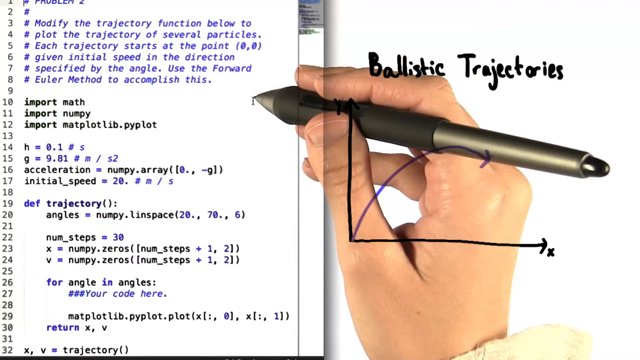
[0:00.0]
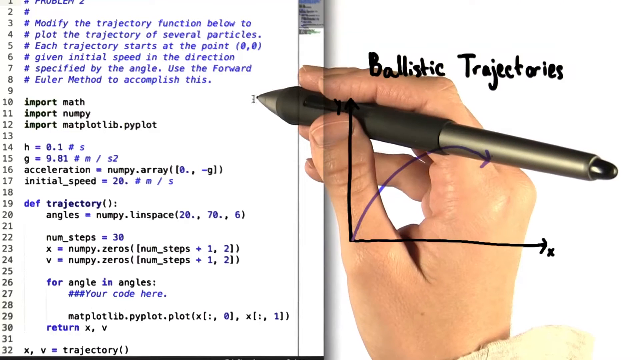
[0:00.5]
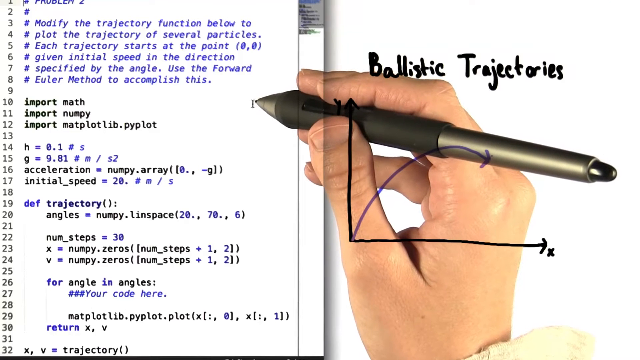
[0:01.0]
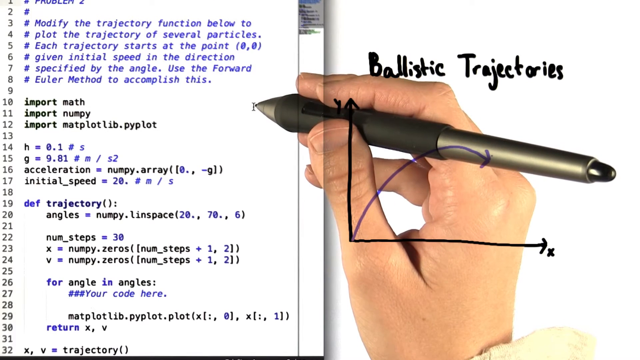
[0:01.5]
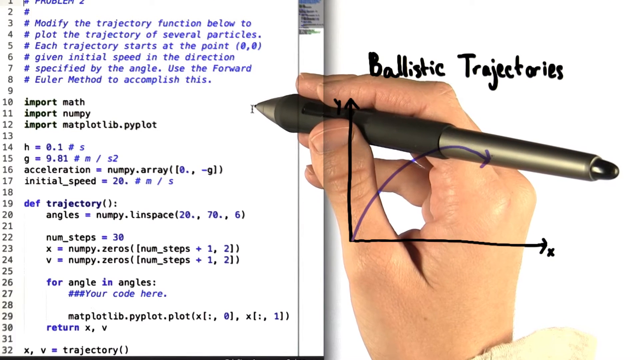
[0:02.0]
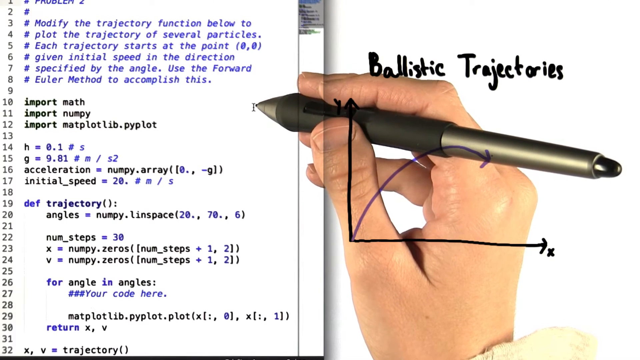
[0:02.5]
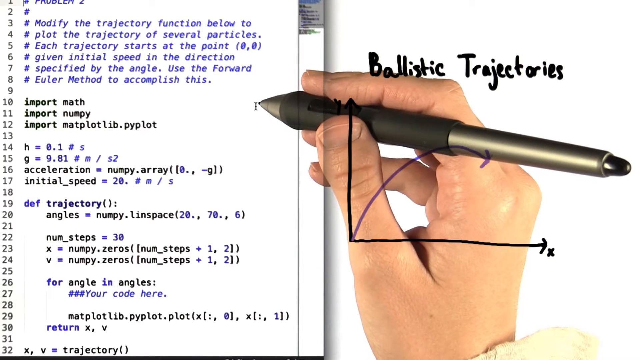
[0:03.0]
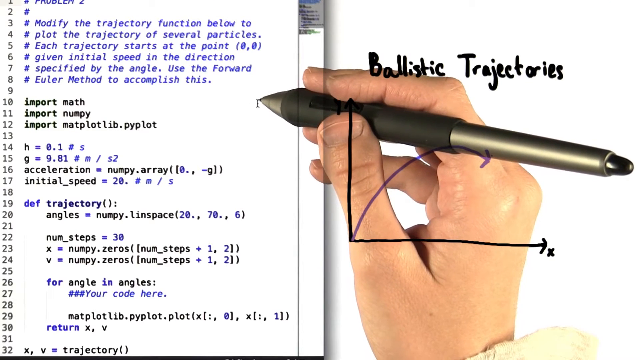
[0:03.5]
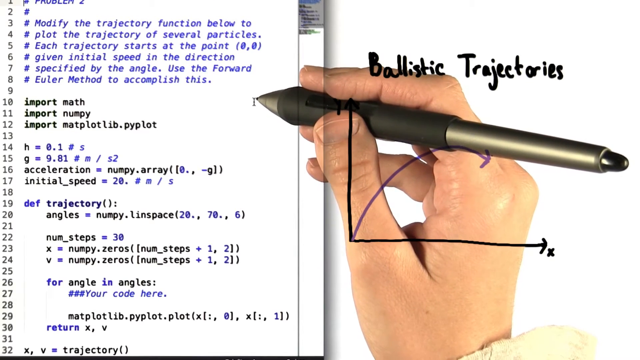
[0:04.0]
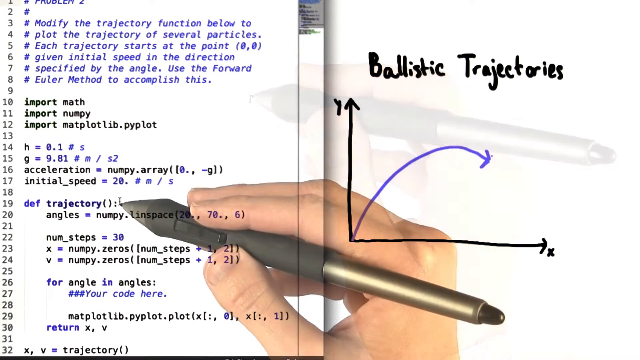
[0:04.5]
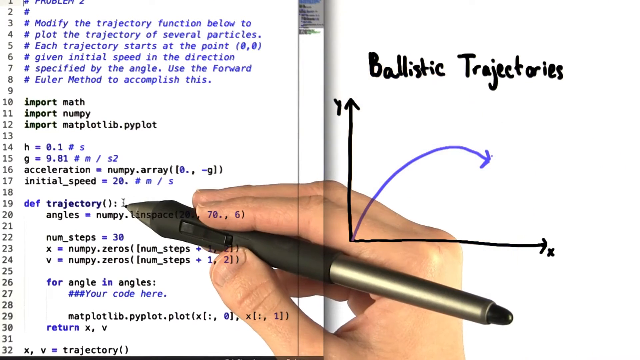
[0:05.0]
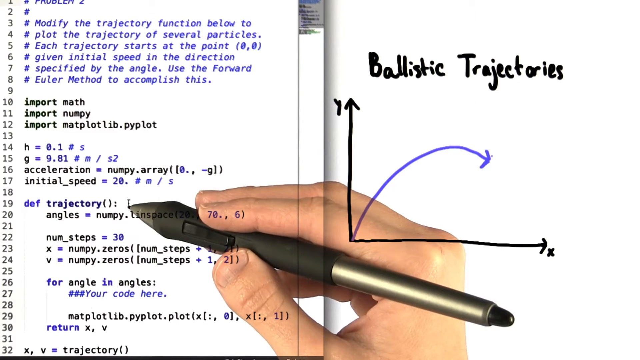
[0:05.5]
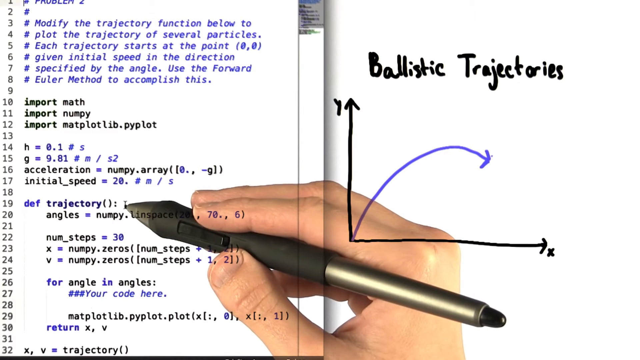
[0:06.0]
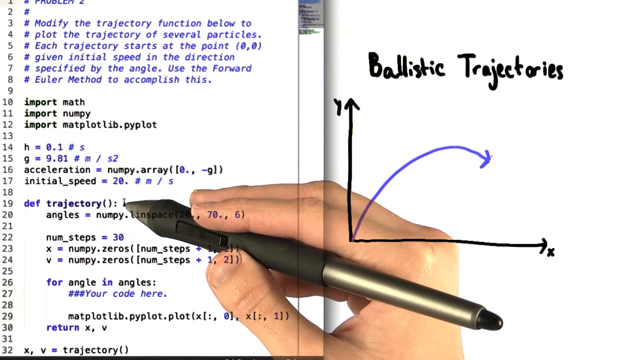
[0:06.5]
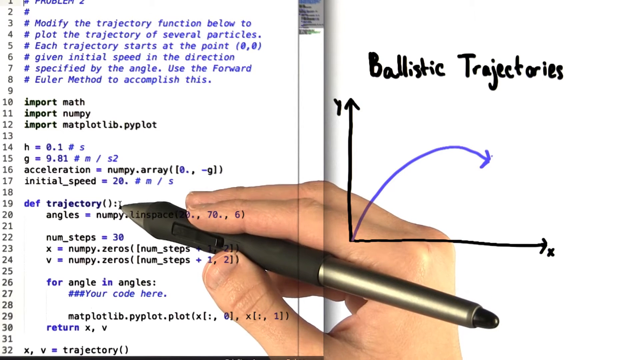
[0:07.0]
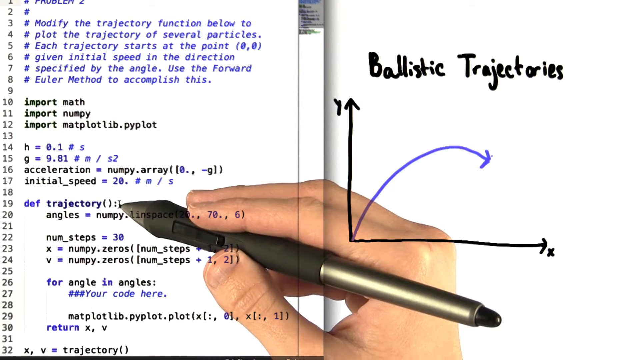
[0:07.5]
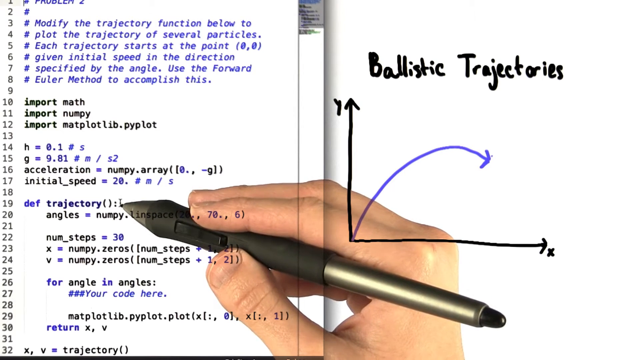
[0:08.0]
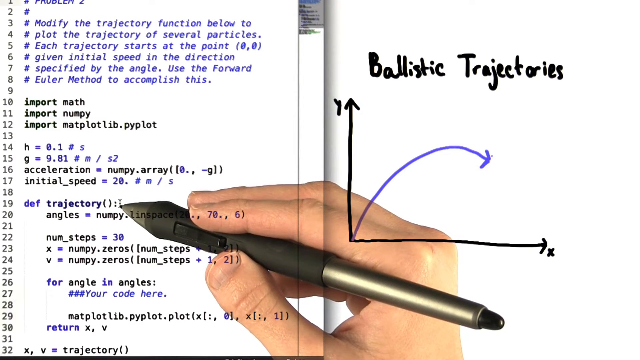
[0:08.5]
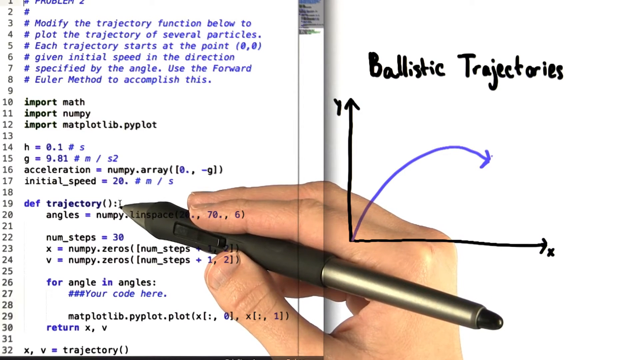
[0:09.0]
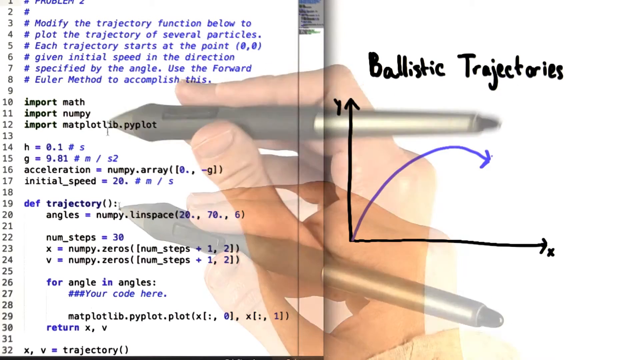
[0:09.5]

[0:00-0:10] Someone uses a smart pen and a transparent surface to write text and draw on their computer screen, which is projected in the foreground of the program they are using. The topic is ballistic trajectories. They draw a graph showing the y and x axes and a line that goes up and then downwards as an example for their calculation. They then look at a long series of code meant to calculate ballistic trajectories, seeming to point to various lines. They start by pointing to a line that reads "def trajectory" and then move the smart pen to a line that reads "import math".